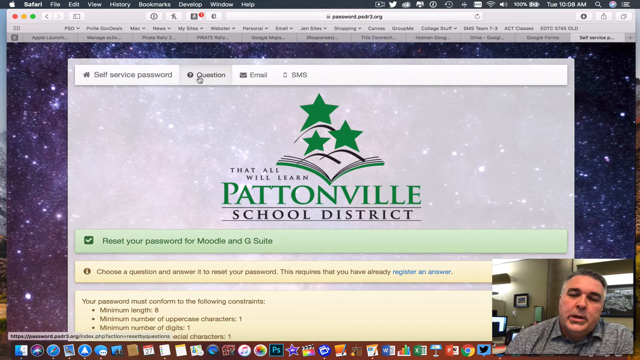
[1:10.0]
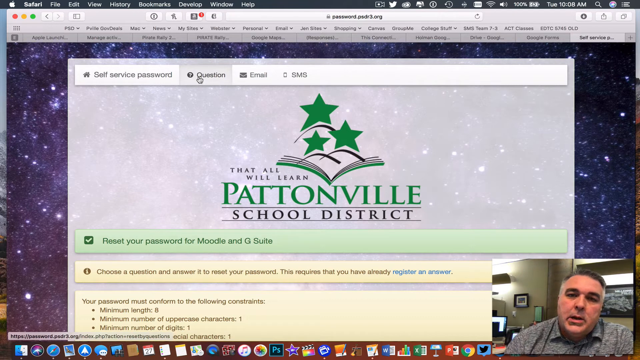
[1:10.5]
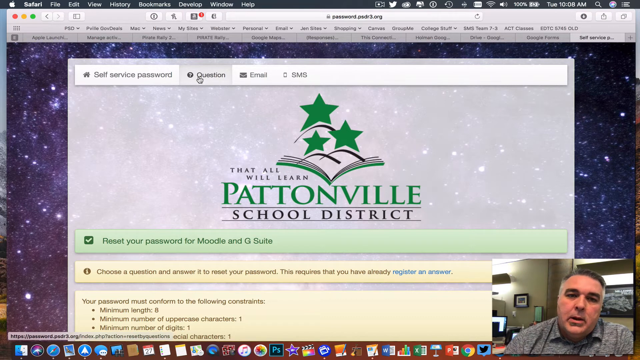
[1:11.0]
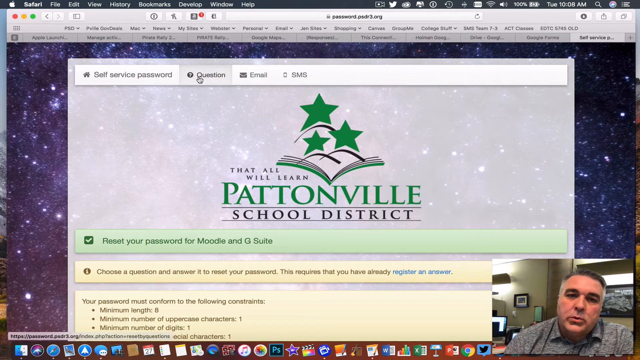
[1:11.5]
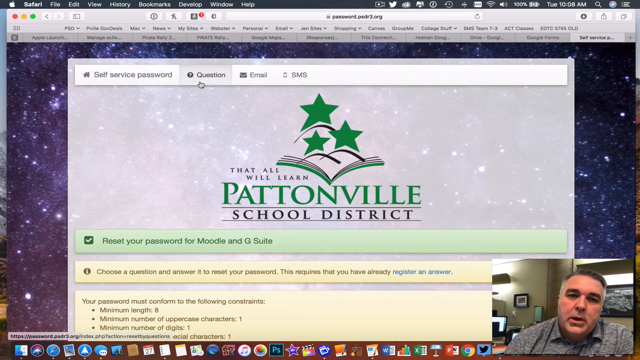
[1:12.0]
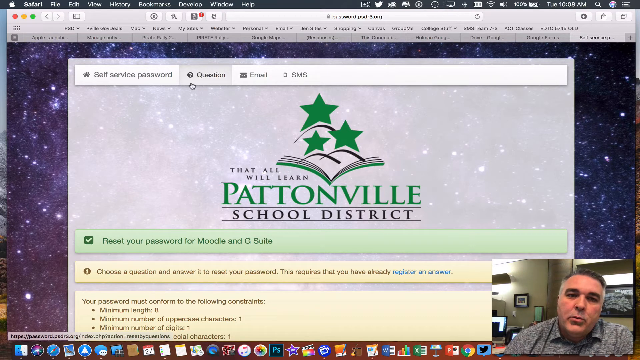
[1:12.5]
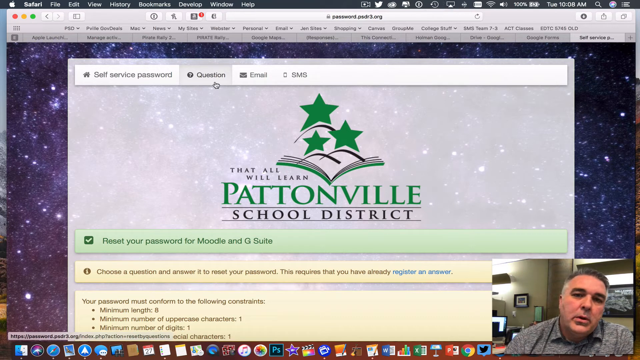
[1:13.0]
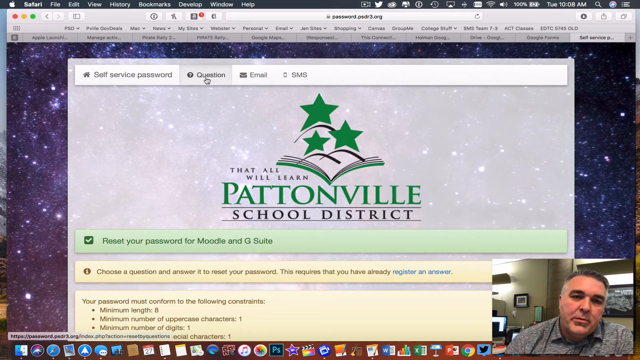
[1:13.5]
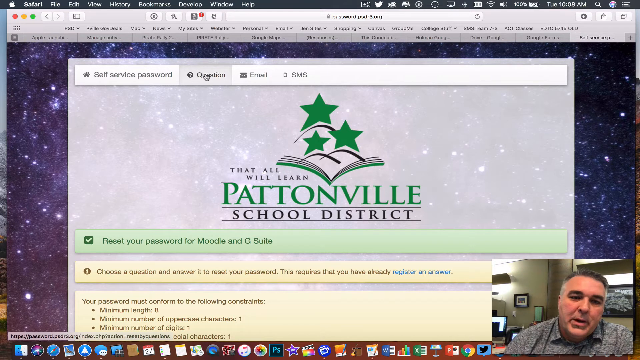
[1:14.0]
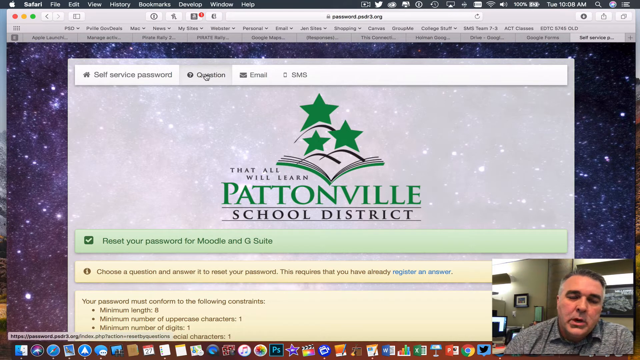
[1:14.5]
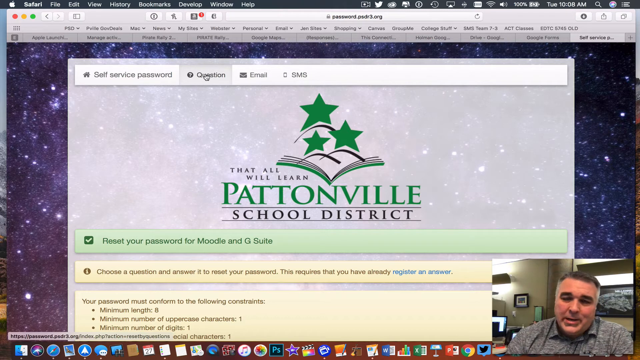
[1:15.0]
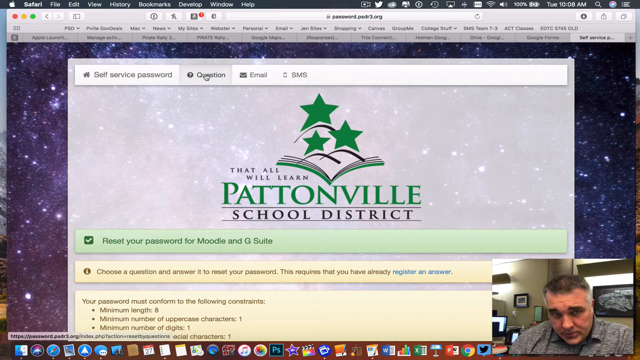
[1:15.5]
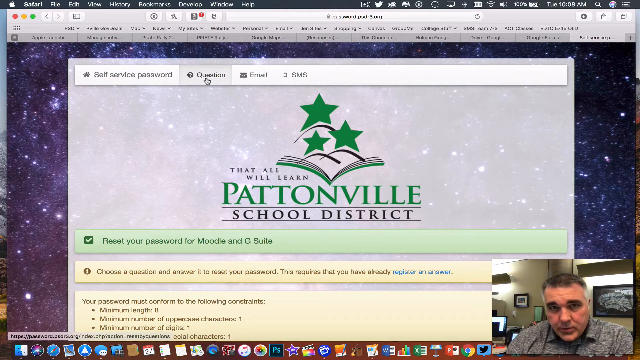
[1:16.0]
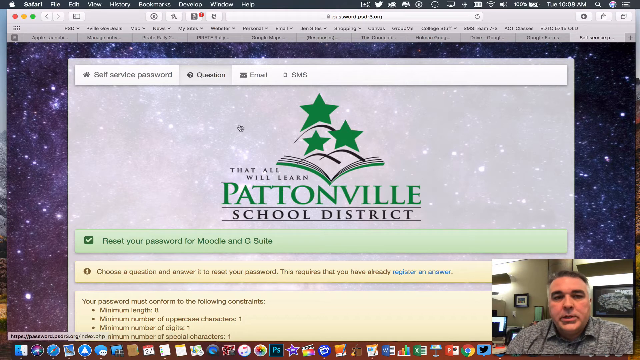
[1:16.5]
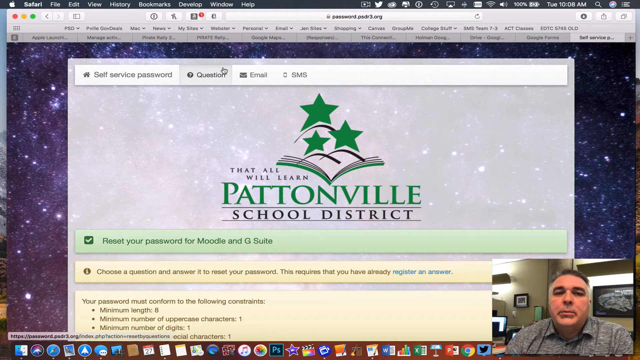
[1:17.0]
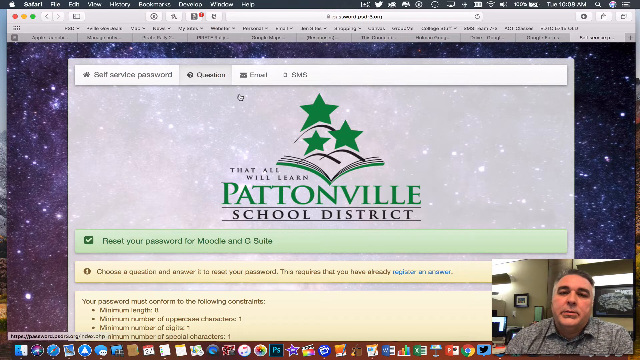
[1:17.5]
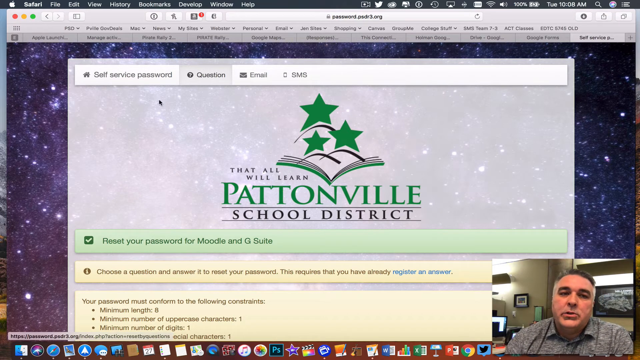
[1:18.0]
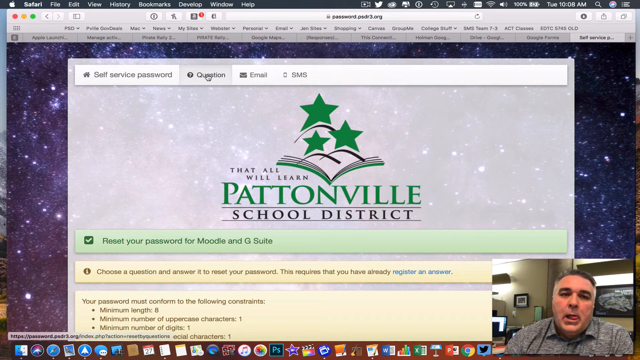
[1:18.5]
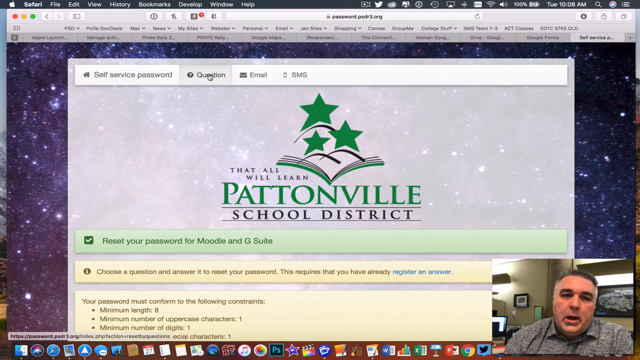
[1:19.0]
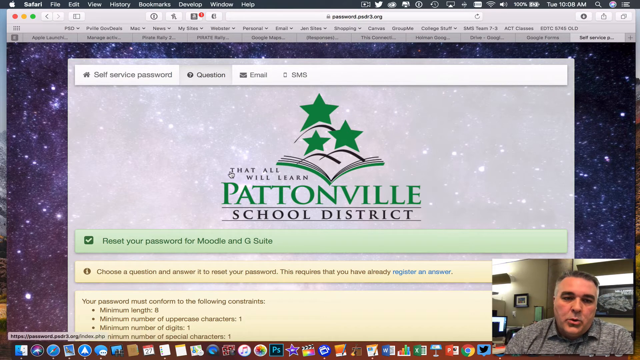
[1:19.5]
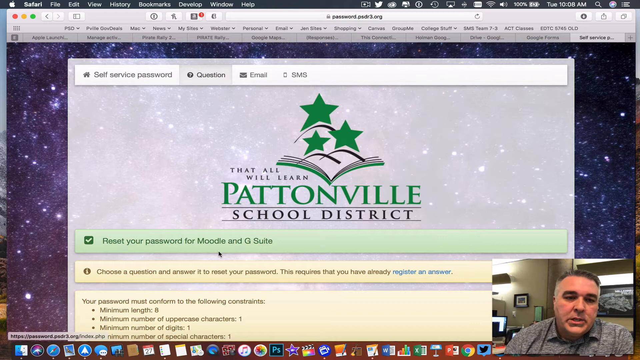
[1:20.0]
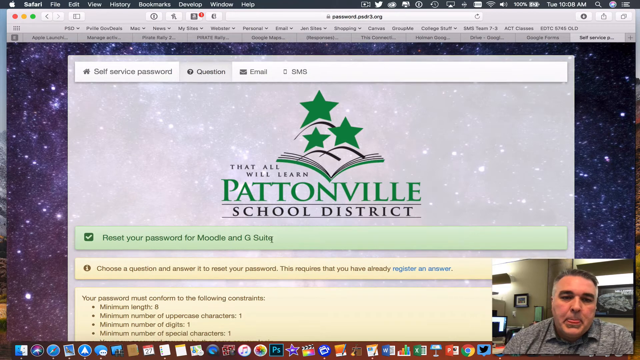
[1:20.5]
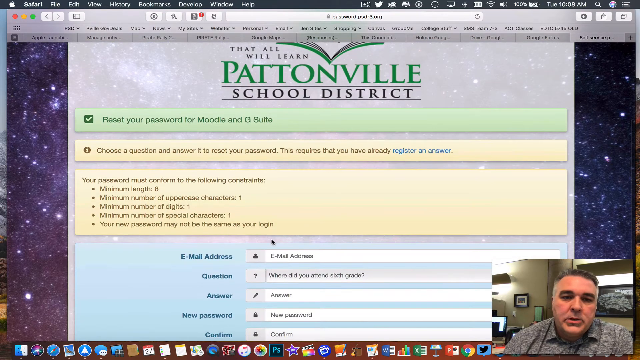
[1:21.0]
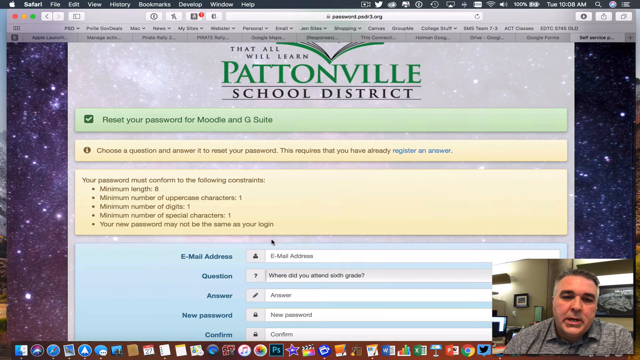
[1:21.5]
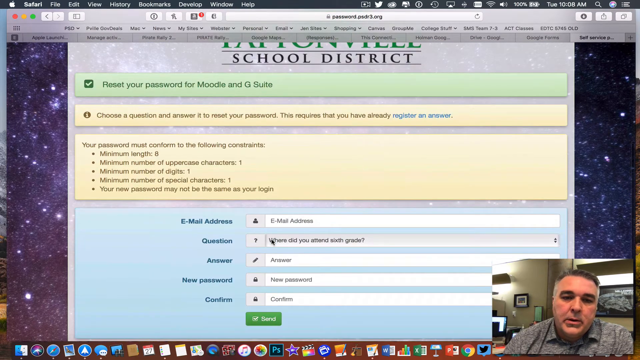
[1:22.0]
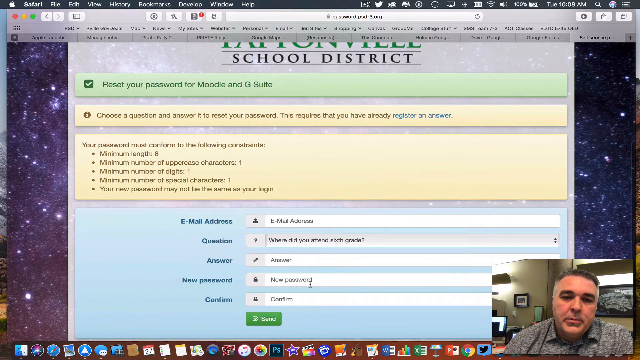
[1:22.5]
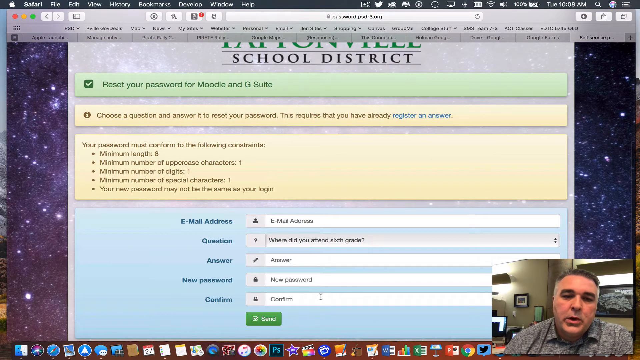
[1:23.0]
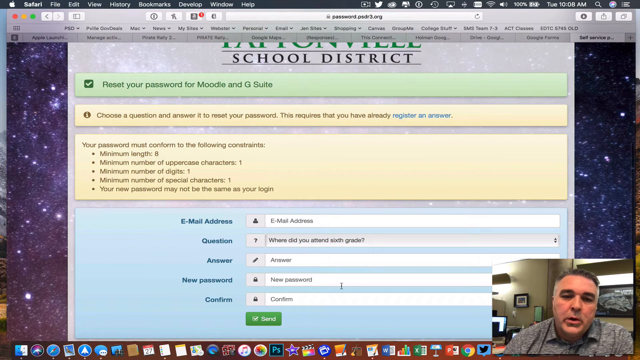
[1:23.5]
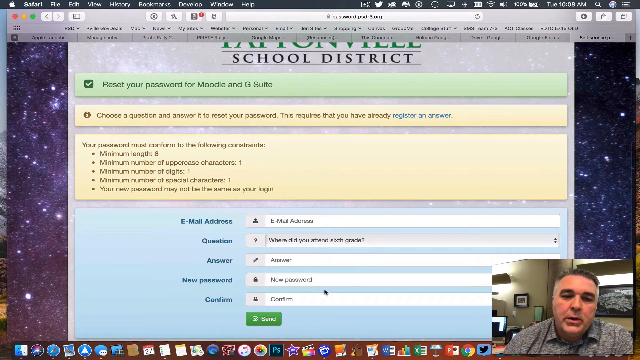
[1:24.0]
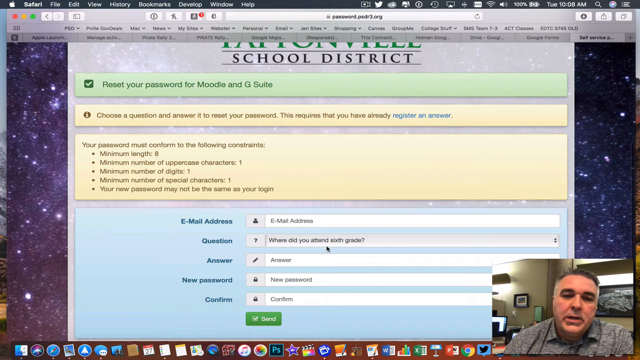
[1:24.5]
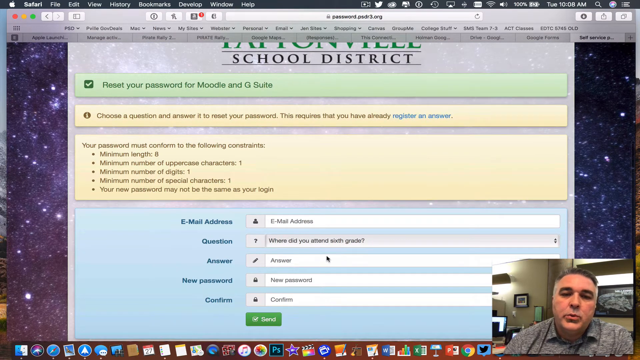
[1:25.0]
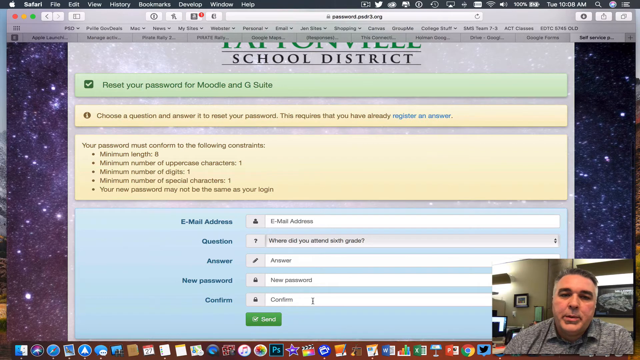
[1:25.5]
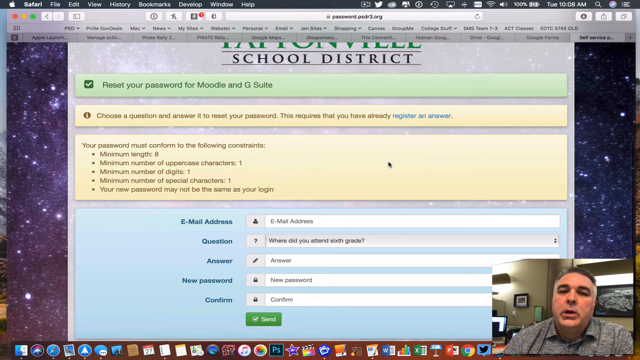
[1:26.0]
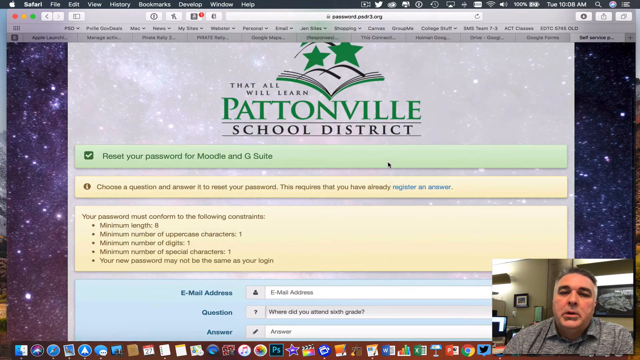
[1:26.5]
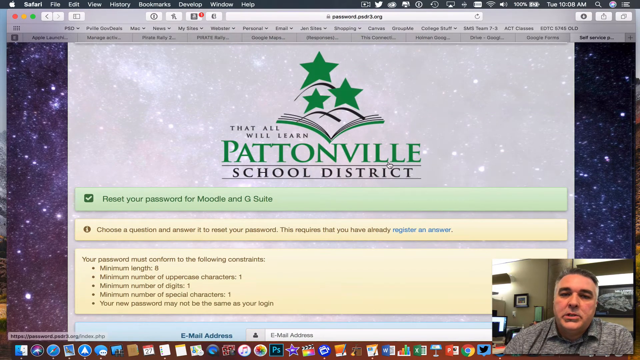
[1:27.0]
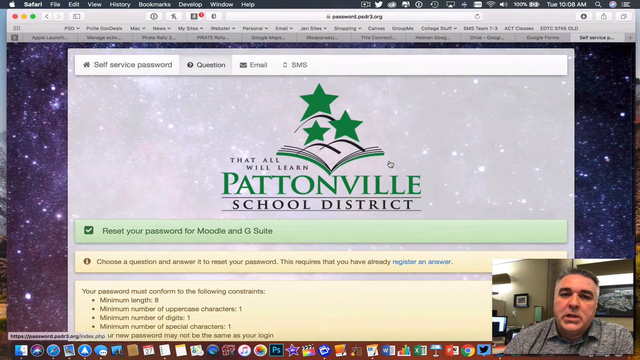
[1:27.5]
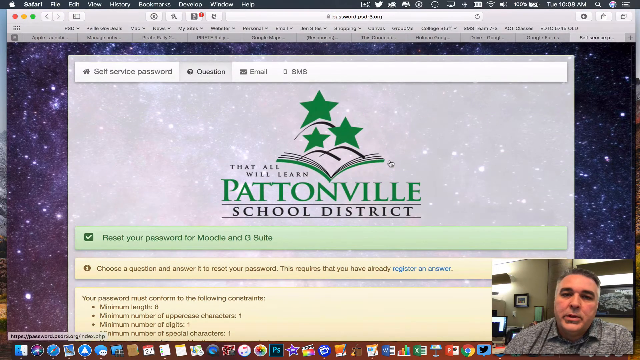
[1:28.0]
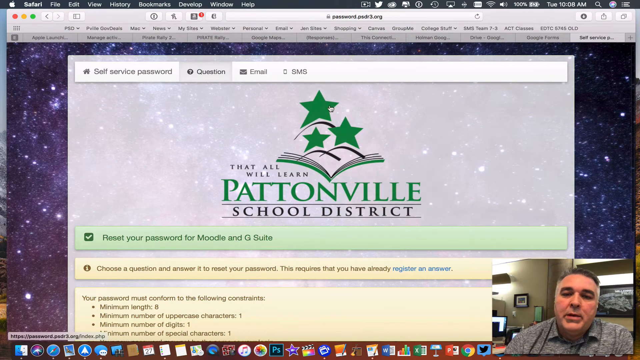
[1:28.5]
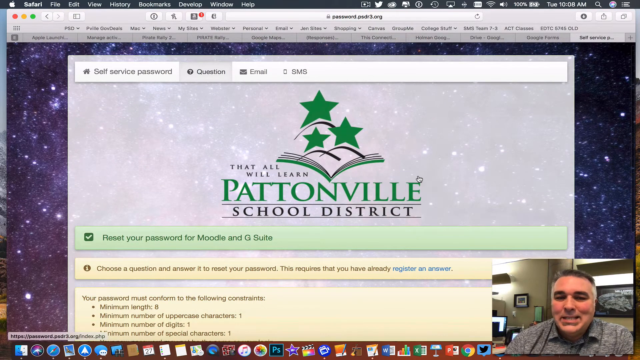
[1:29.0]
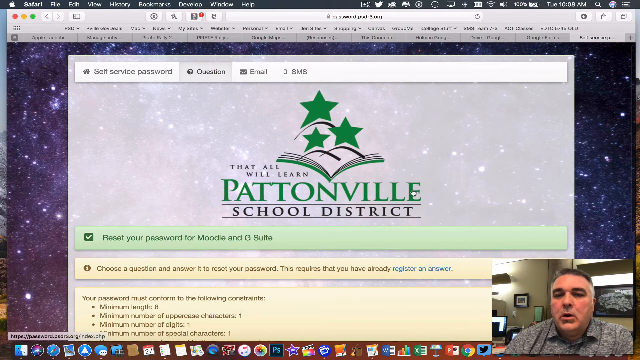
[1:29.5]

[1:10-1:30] The computer is an Apple laptop: the Apple logo is in the upper left-hand corner, and the top bar reads Safari, File, Edit, View, History, Bookmarks, Develop, Window, Help, along with social media icons such as the Twitter symbol. The man is talking and keeps circling his mouse over the question button. He scrolls back down, and since he clicked question, a question section has been added to the form: after the email address field there is now a question, apparently "where did you attend sixth grade," followed by an answer field, a new password field and a confirm field, each with a space to type in.